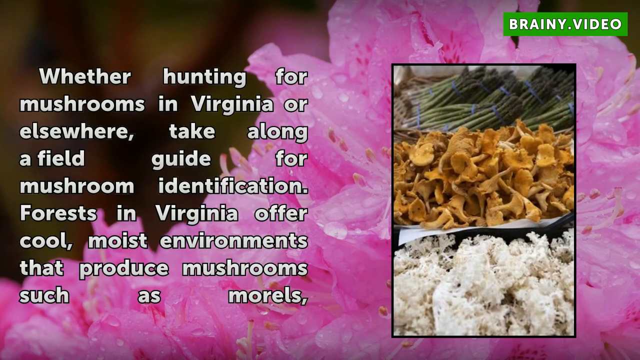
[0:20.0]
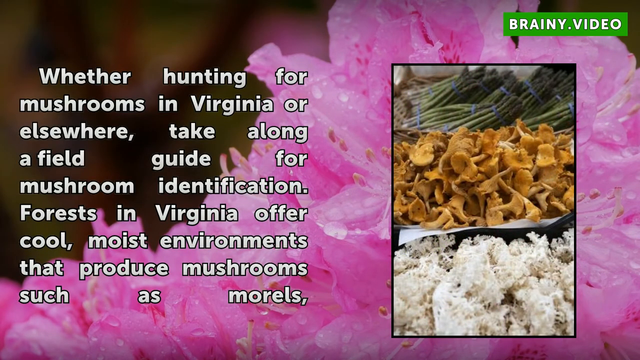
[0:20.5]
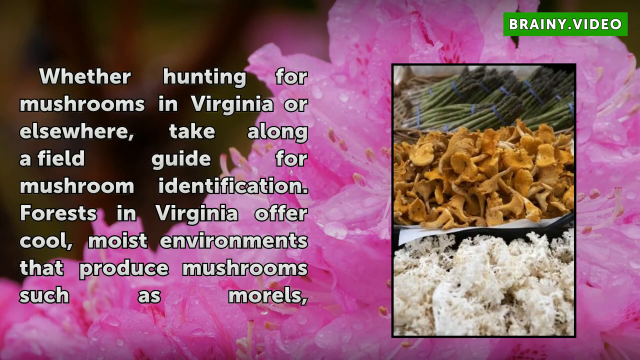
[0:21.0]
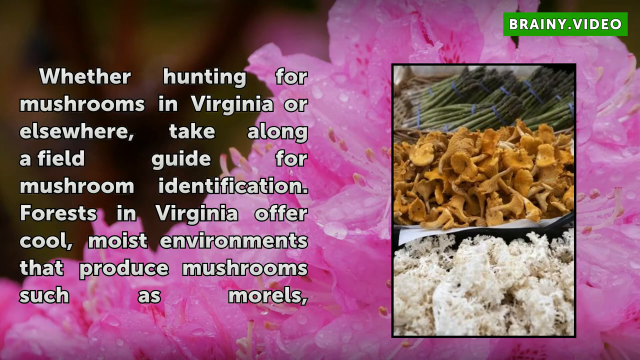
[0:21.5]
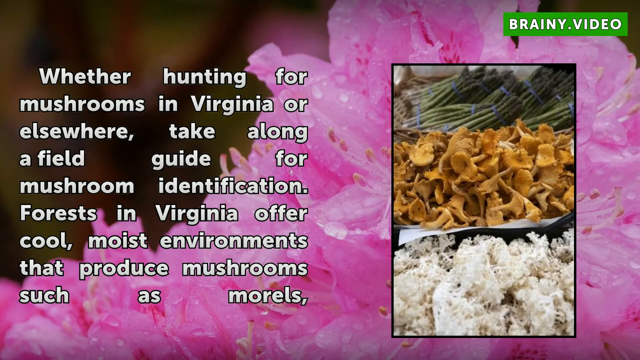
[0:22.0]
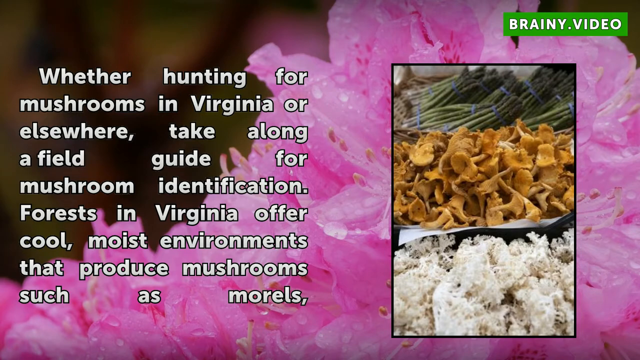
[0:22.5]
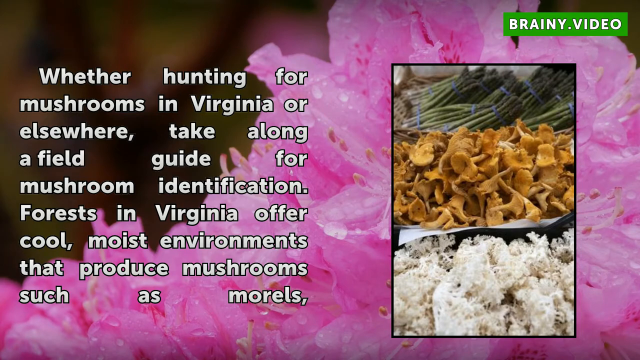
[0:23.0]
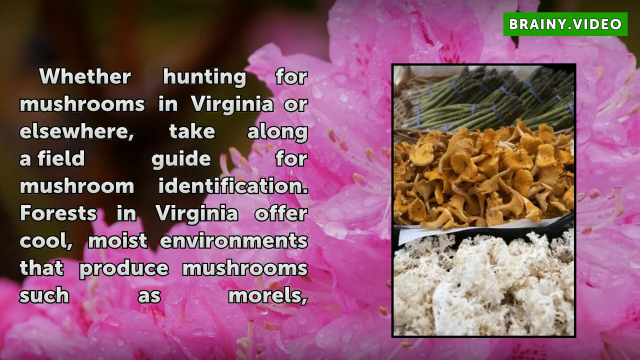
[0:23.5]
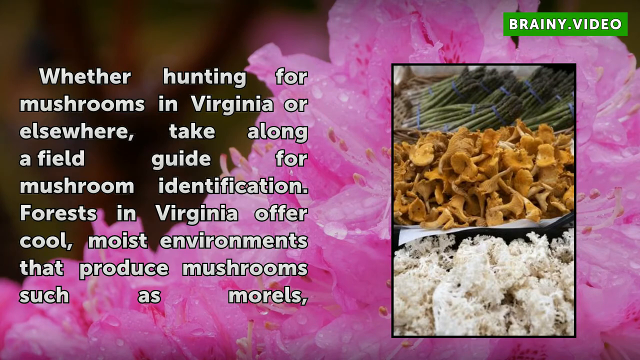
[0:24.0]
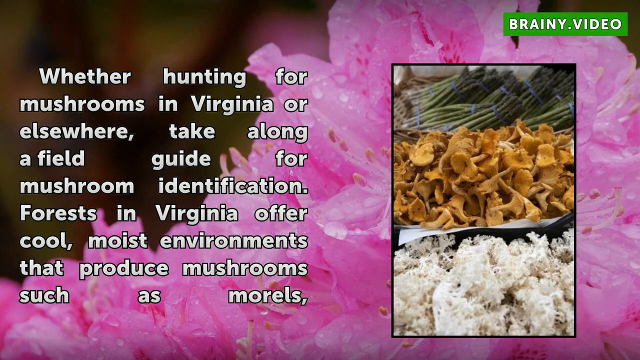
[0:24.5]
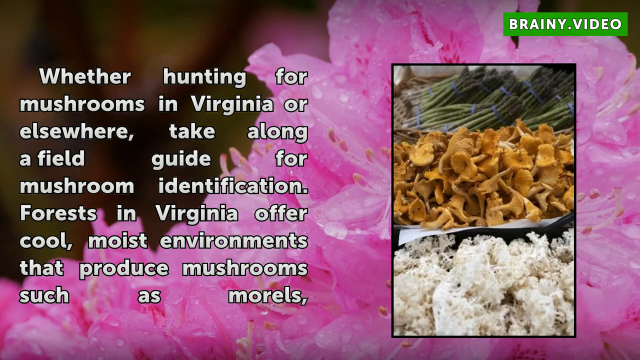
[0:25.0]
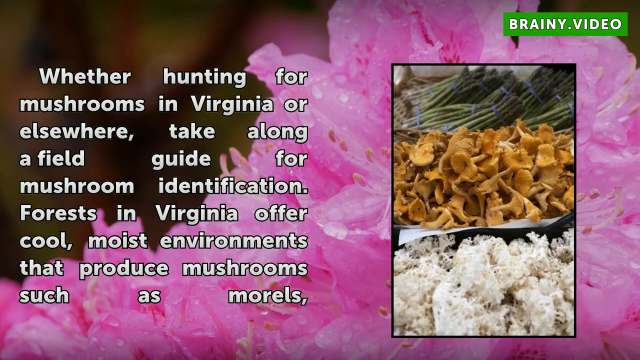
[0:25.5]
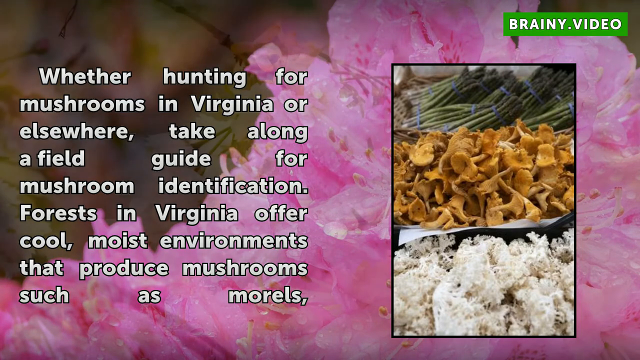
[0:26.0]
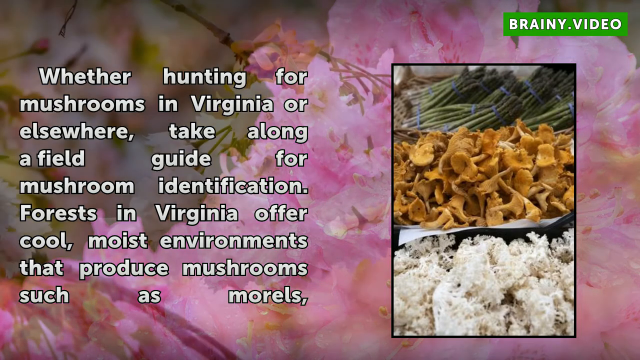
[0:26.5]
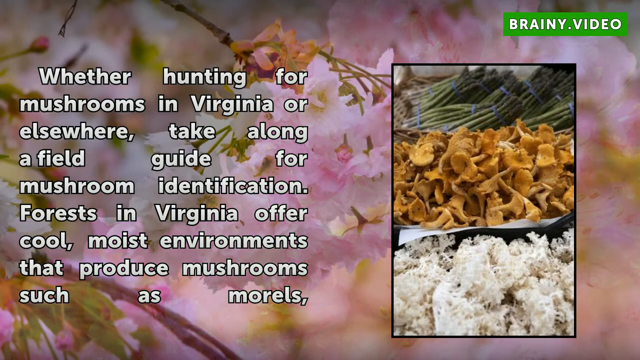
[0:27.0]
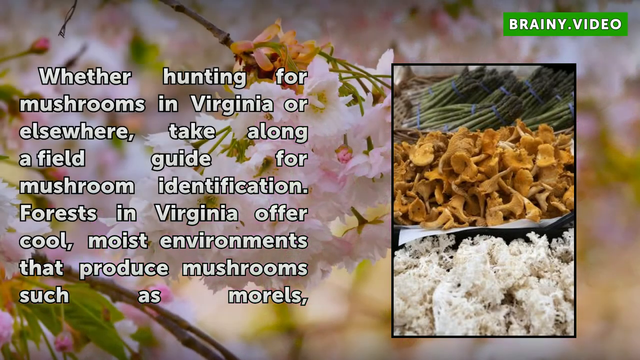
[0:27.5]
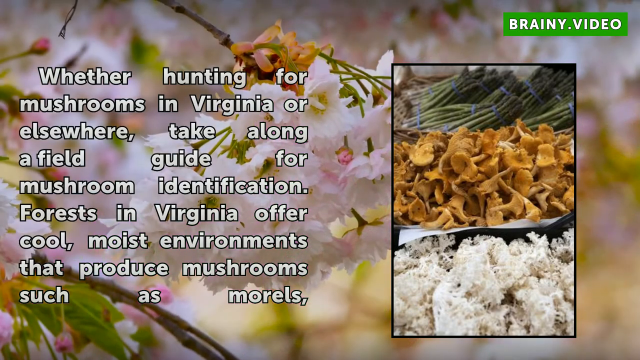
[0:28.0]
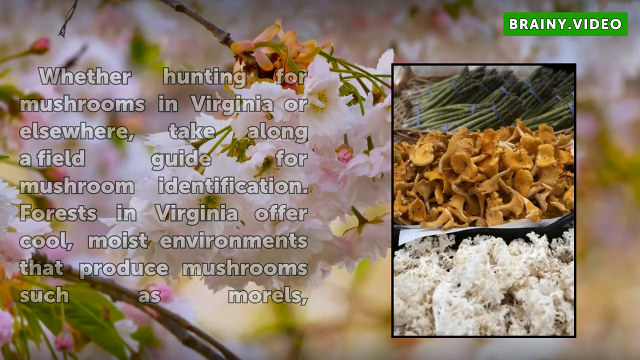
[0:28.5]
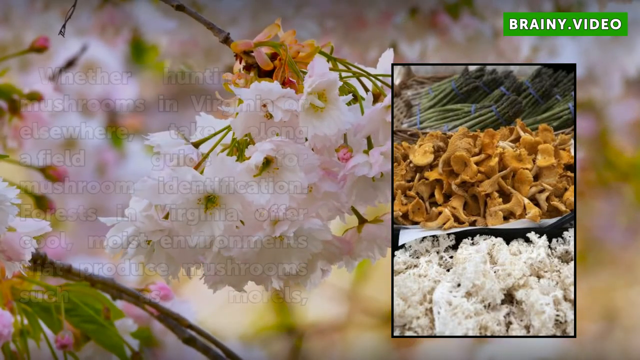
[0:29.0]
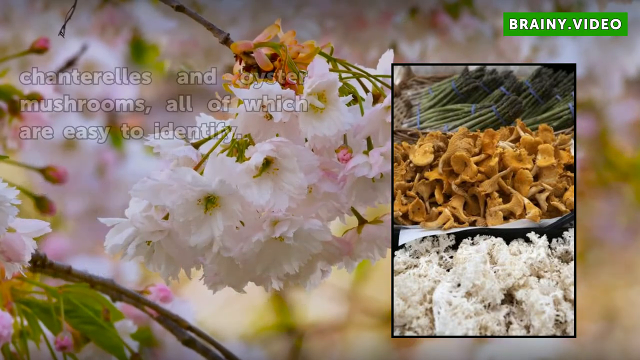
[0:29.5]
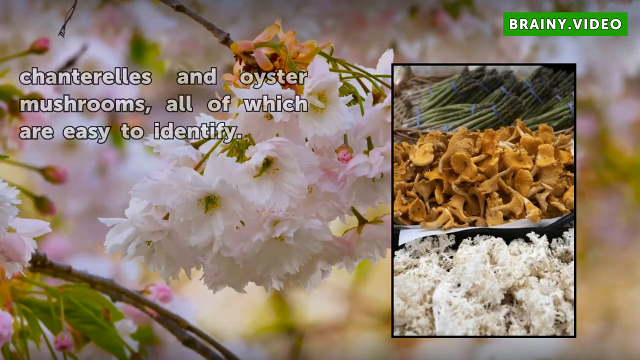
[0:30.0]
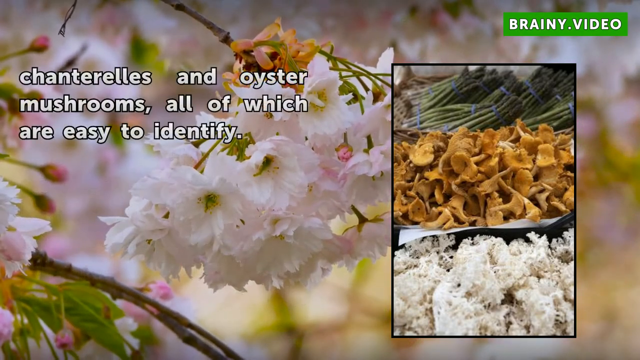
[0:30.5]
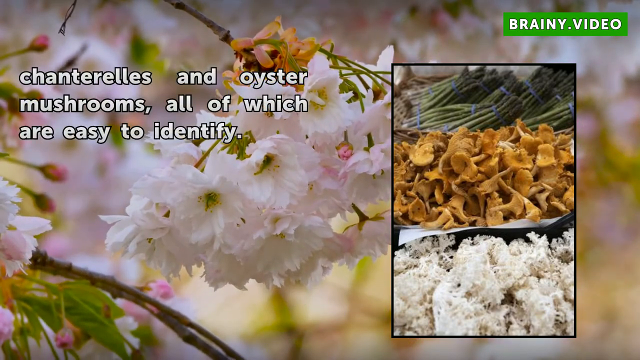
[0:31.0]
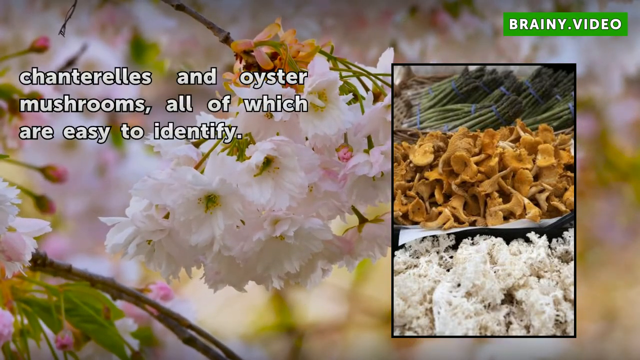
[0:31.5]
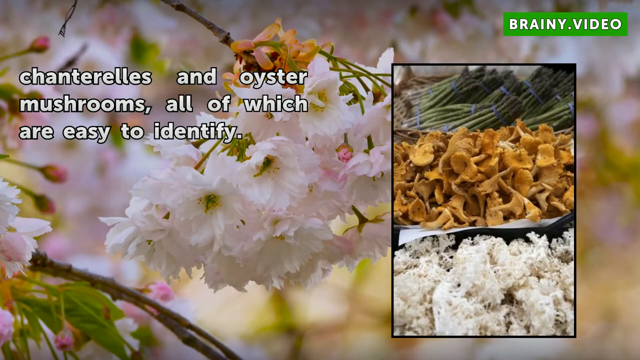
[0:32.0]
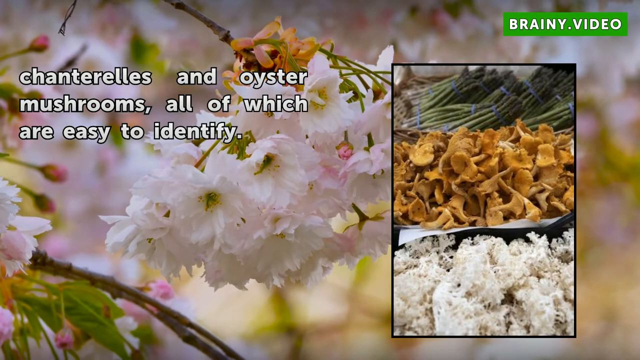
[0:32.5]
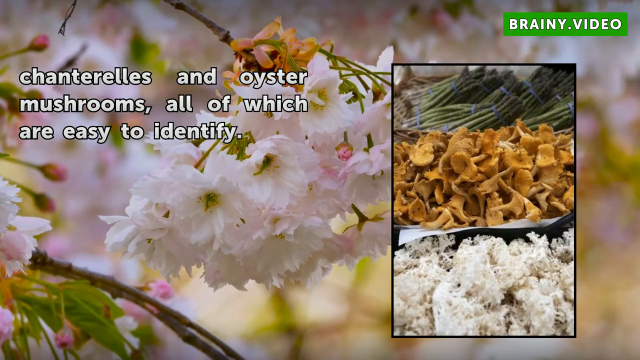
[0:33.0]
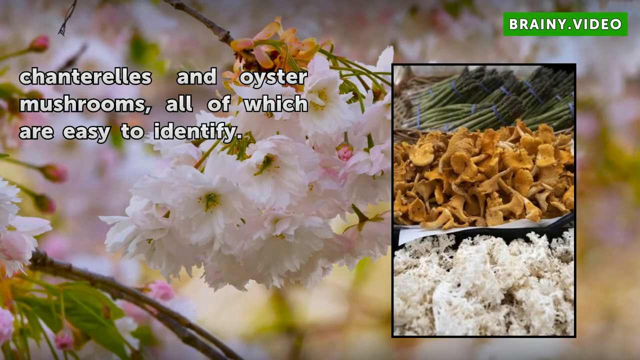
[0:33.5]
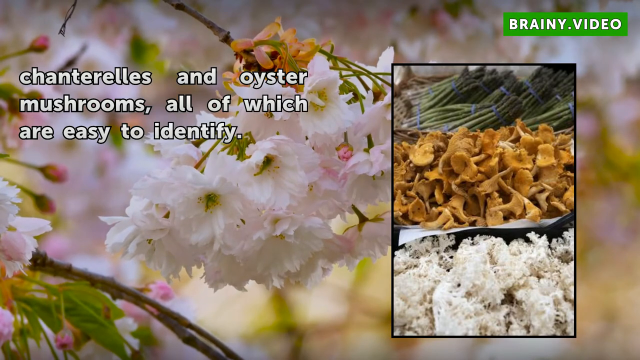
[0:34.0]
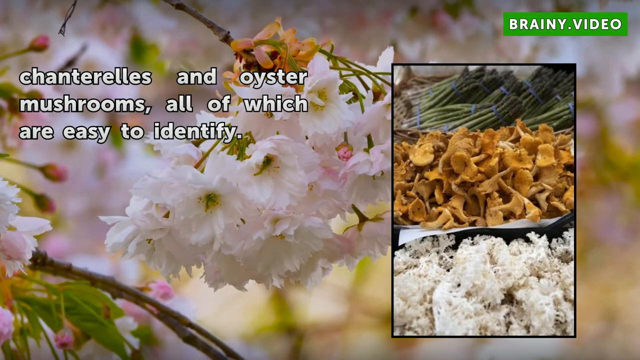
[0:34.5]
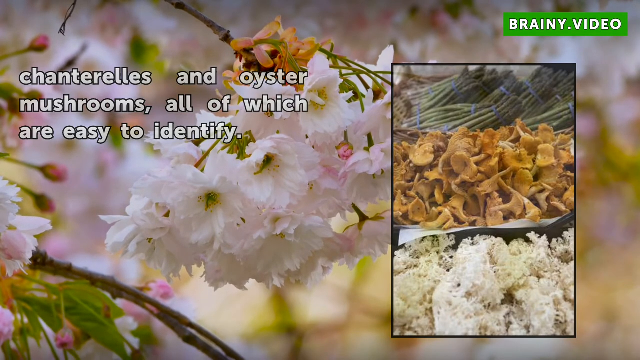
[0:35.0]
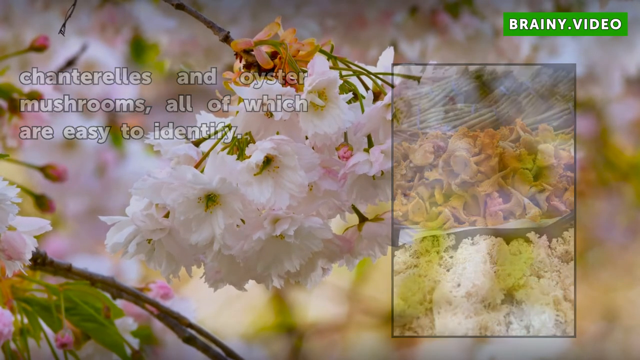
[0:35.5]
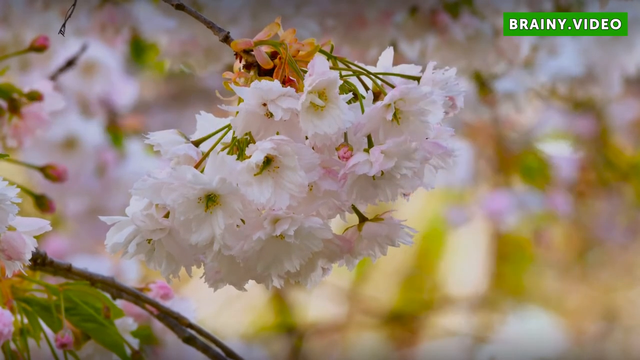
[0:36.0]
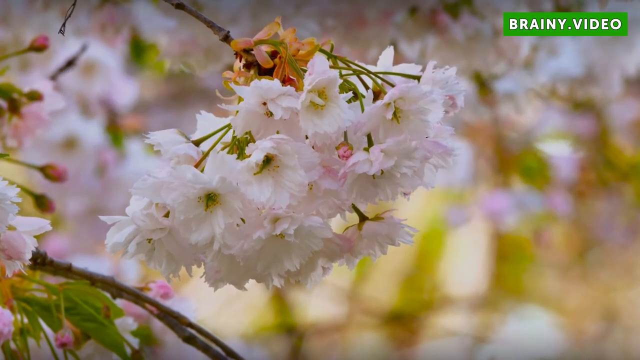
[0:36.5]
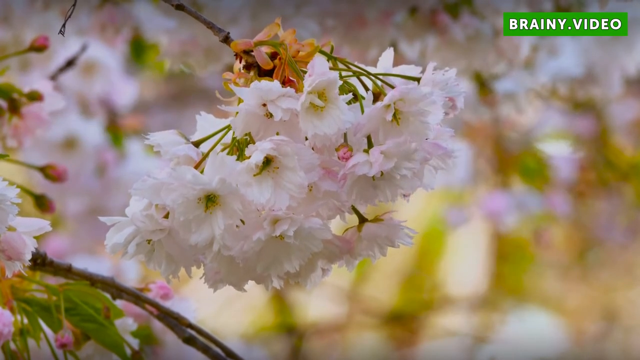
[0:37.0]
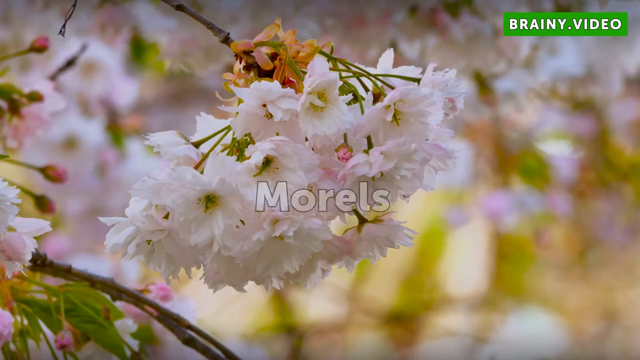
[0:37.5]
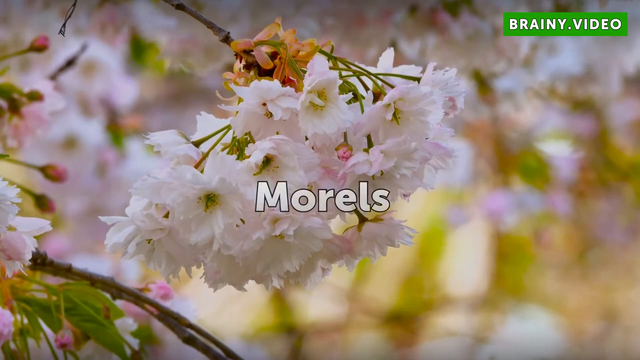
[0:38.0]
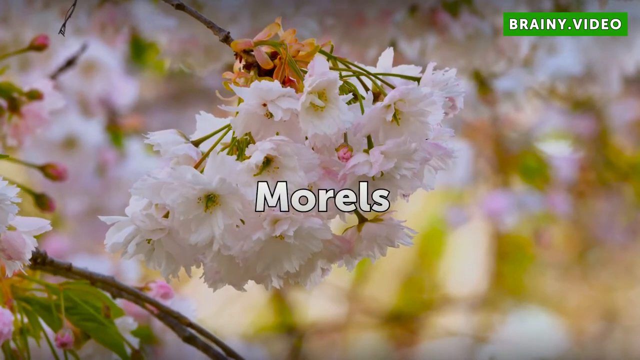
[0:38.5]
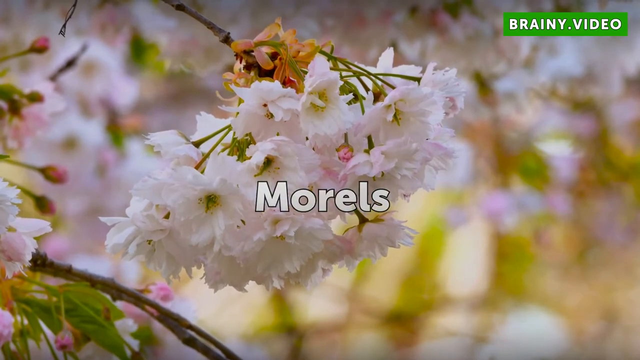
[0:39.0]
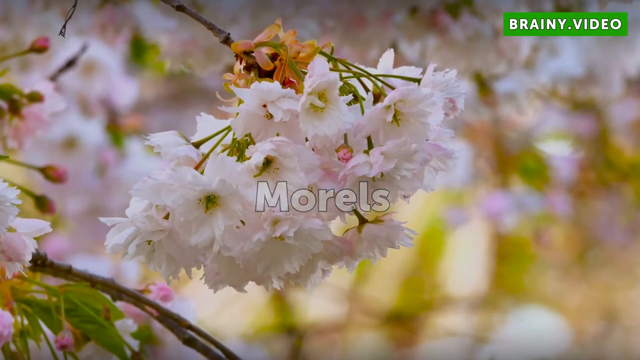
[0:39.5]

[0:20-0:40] A pink flower is in the background, with text on the screen that reads "whether hunting for mushrooms in Virginia or elsewhere, take along a field guide for mushroom identification," followed by a line about cool, moist environments that produce mushrooms "such as morels." On the right side of the screen is an image: its lower part has a white substance that appears to be some type of fungus, the middle apparently holds brown mushrooms, and the top shows sticks of asparagus tied up with blue bands. It looks like a retail setting selling mushrooms and asparagus. The background then changes to white flowers that look like they are growing on tree branches, from a bush or tree rather than a flower plant. The text on this screen says "chanterelles and oyster mushrooms, all of which are easy to identify," and then "morels."